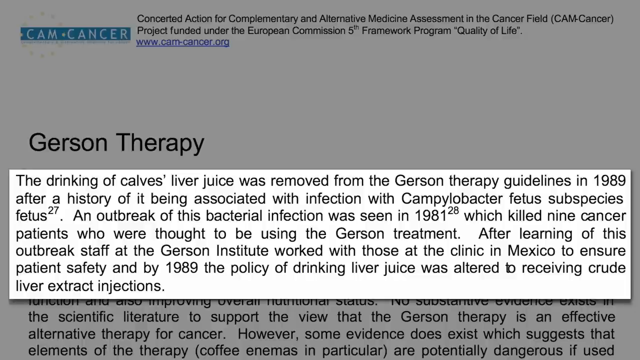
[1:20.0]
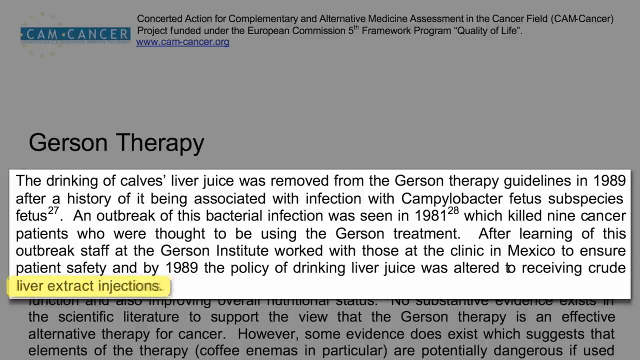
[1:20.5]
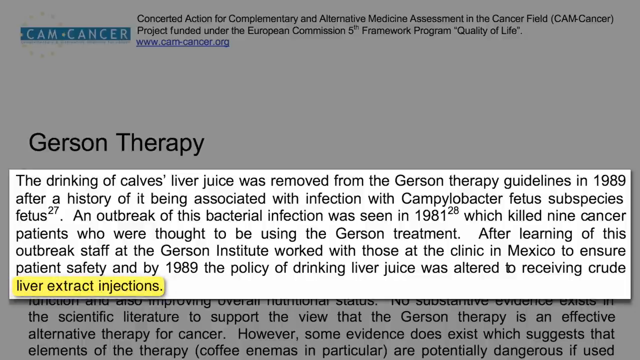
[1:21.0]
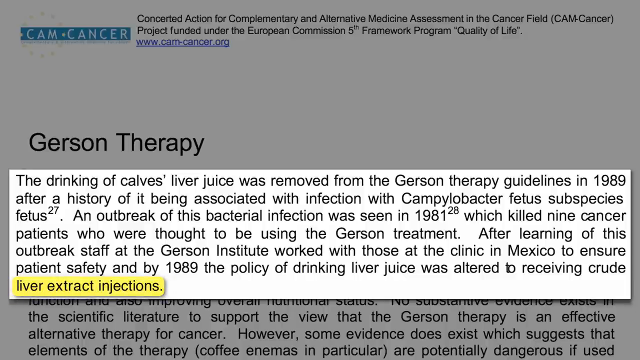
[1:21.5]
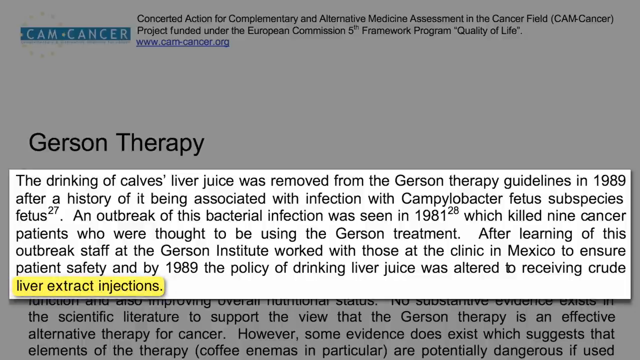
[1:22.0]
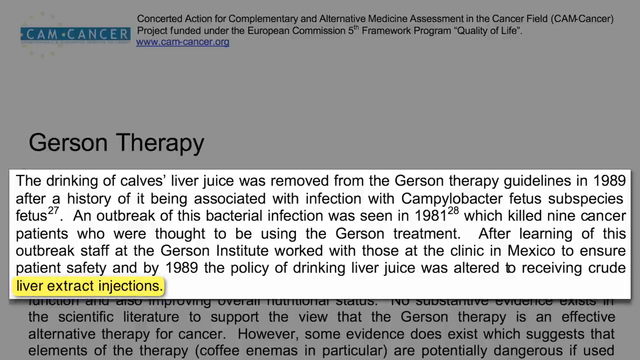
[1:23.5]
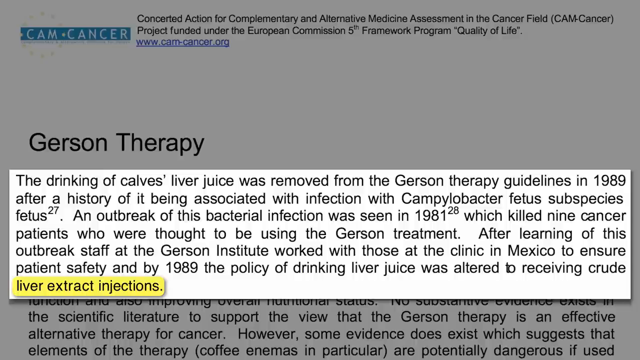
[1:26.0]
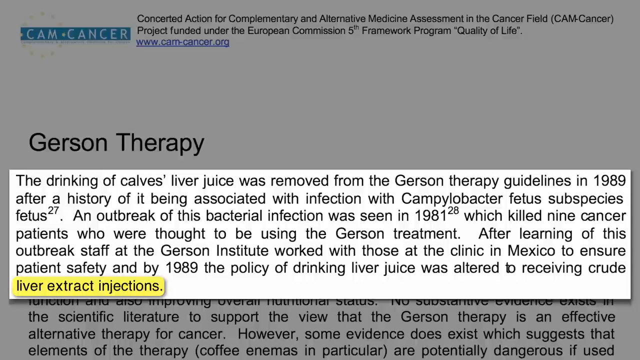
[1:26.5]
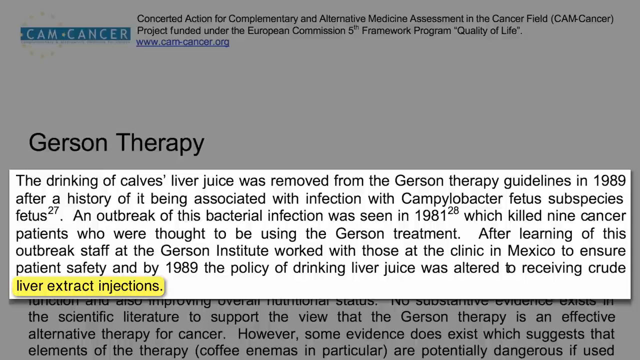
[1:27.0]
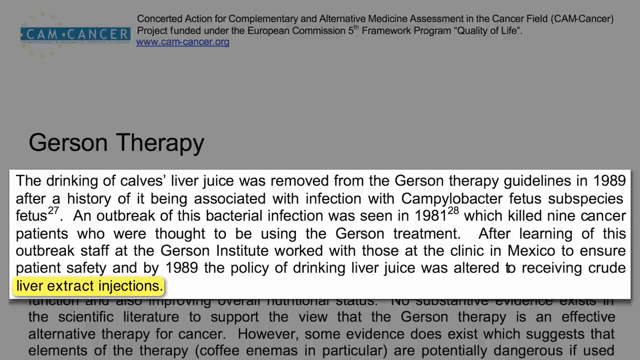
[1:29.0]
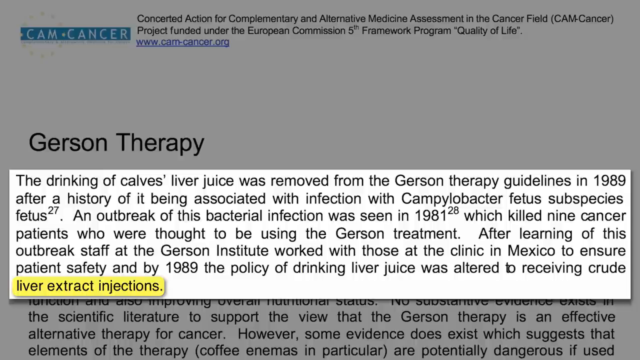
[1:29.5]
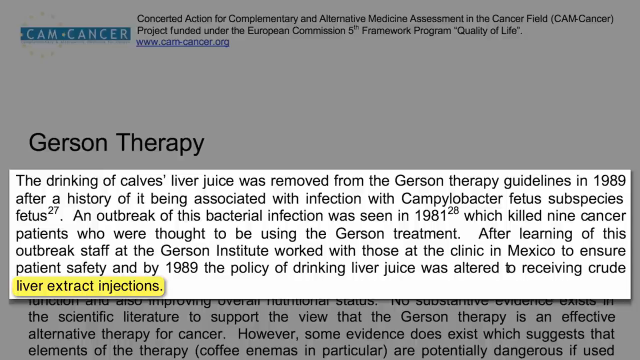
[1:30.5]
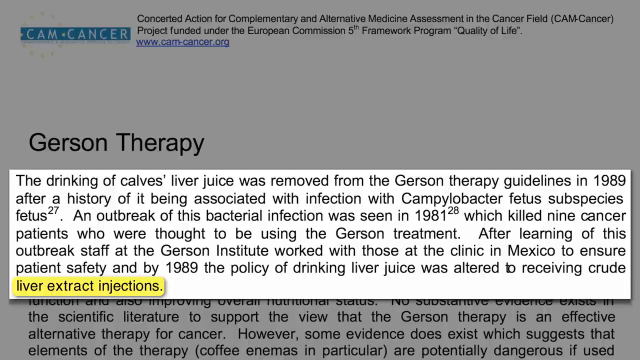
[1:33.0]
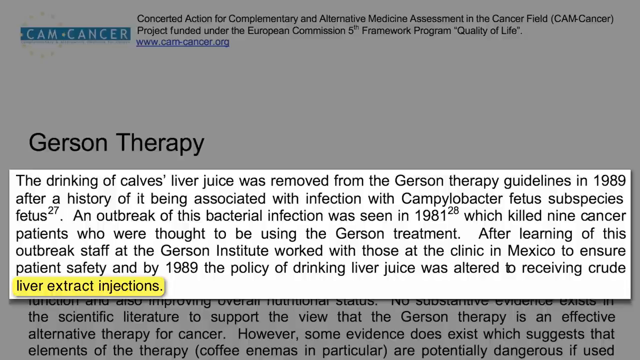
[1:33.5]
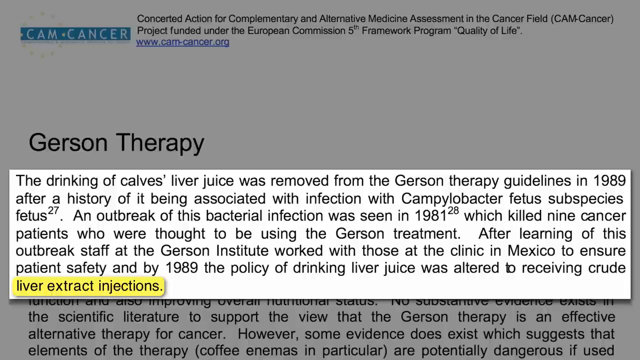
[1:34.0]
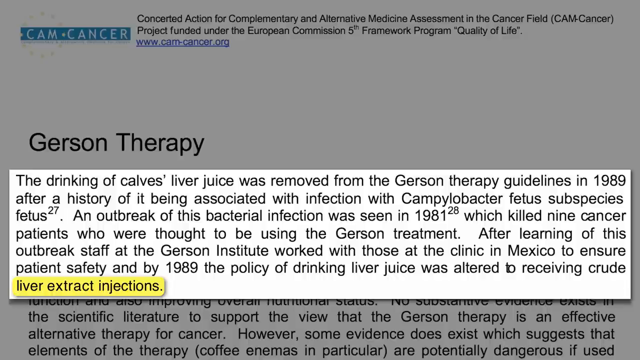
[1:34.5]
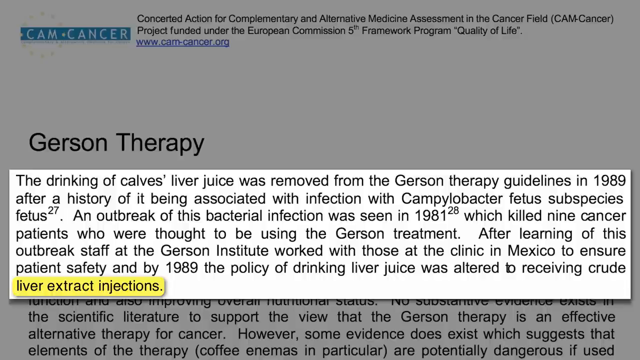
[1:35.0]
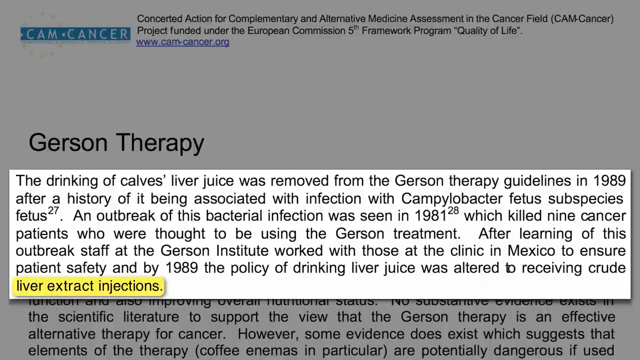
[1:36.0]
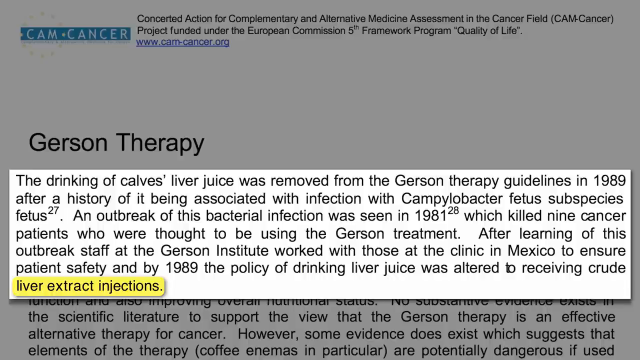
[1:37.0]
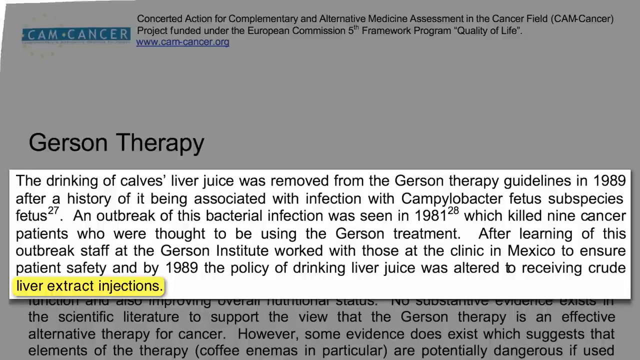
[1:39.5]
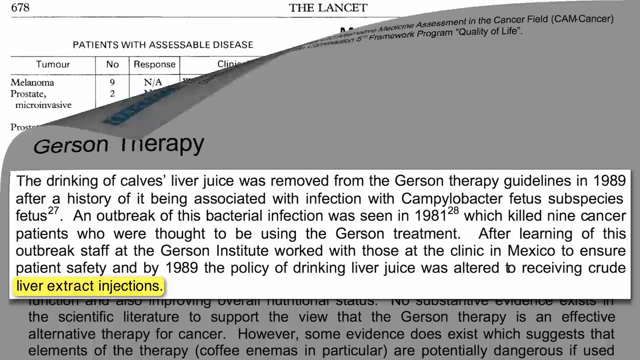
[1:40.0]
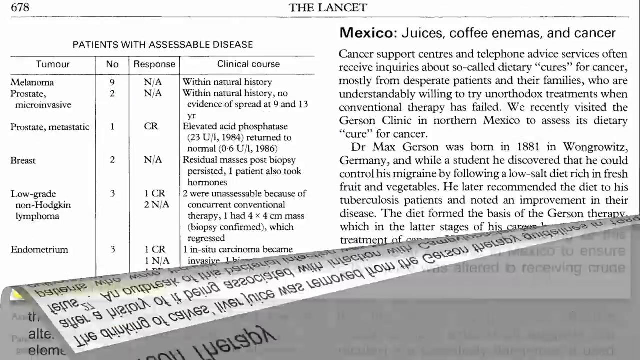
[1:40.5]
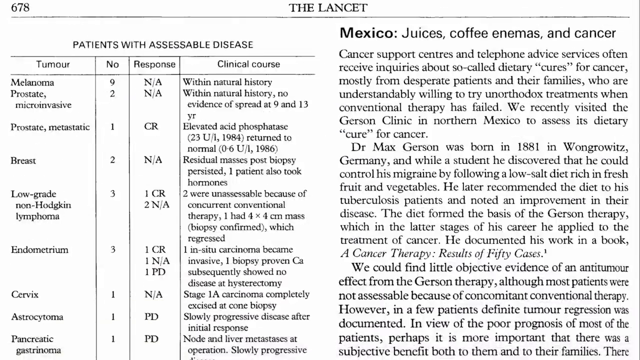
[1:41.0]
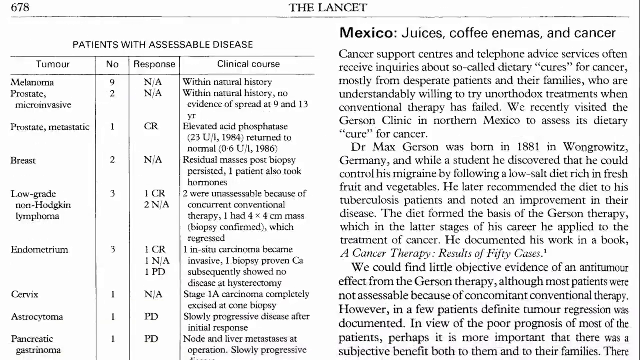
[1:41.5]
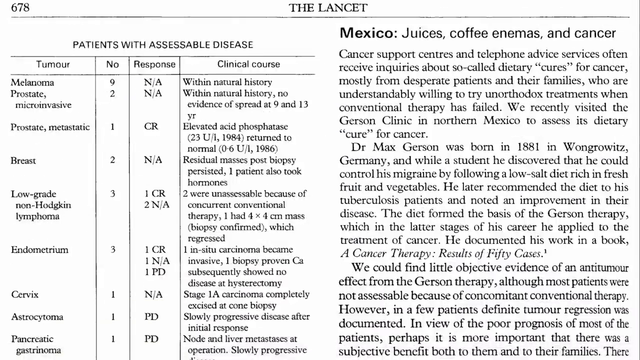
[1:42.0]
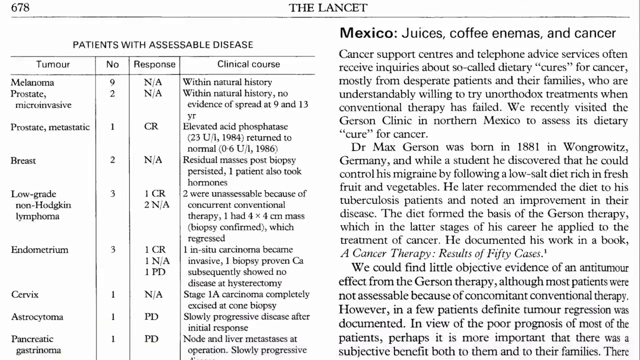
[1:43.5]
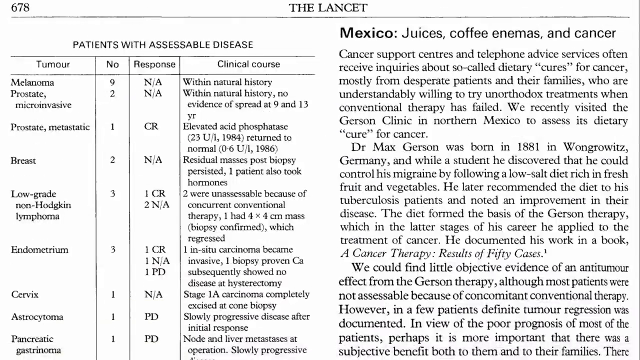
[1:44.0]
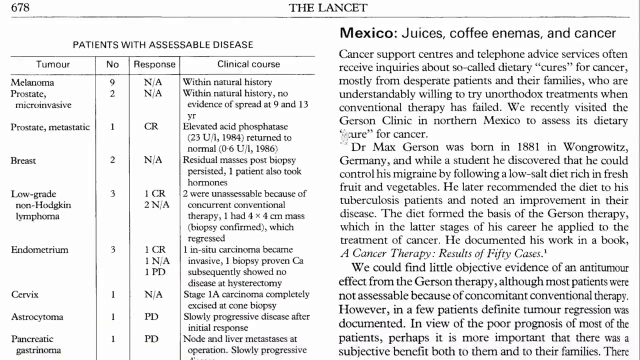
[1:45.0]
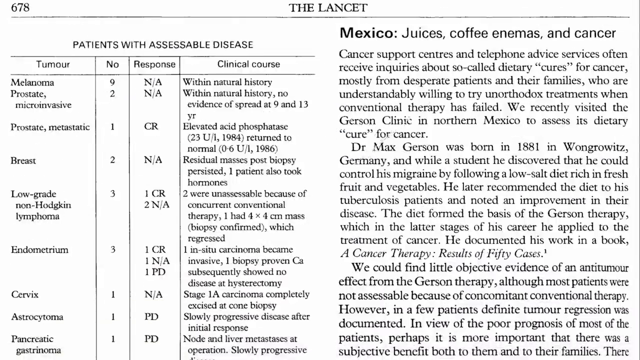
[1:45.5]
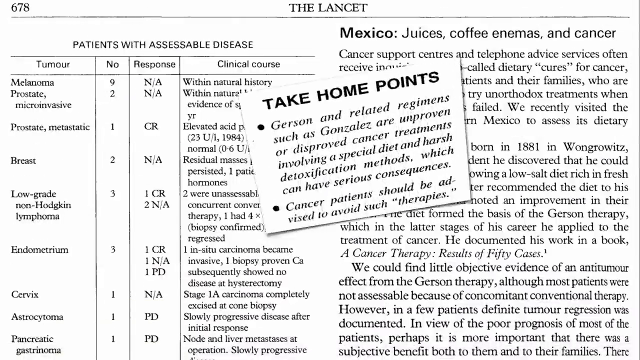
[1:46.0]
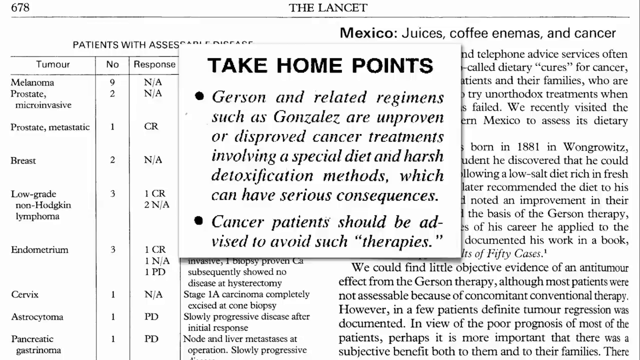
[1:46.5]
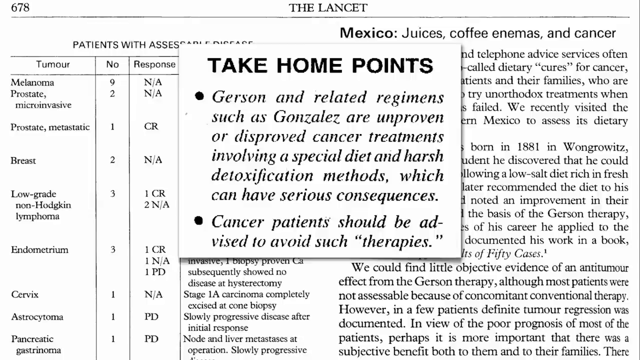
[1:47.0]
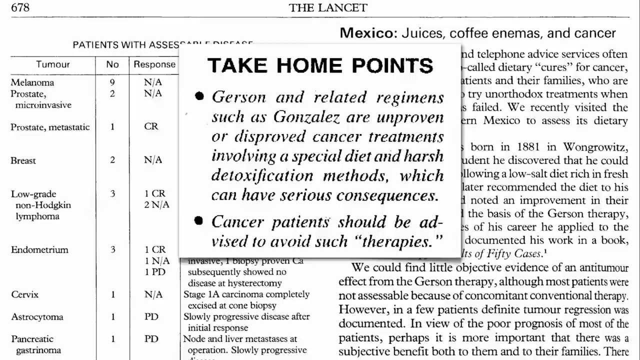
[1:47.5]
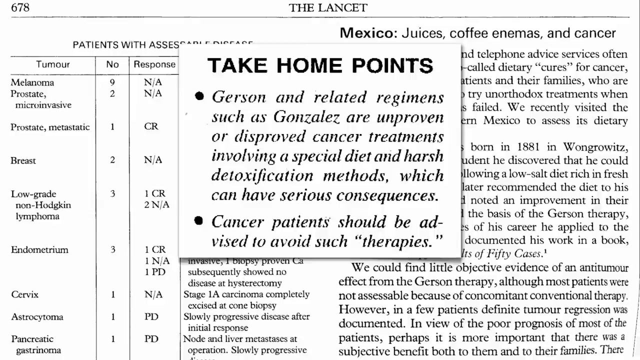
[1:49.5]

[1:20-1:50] A newspaper is in the background, and a piece of the article is enlarged to cover the center of the screen. It reads "the drinking of calves liver juice was removed from the garrison therapy guidelines in 1999 after a history of it being associated with infection with Campylobacter fetus subspecies fetus. An outbreak of this bacterial infection was seen in 1981, which killed nine cancer patients who were thought to be using the garrison treatment. After learning of this outbreak, staff at the Garrison Institute worked with those at the clinic in Mexico to ensure patient safety, and by 1989, the policy of drinking liver juice was altered to receiving crude liver extract injections." The words "liver extract injections" are highlighted in yellow. Another news article is then shown, and a piece of it is enlarged, reading "take-home points, garrison and related regiments such as Gonzales are unapproved or disapproved cancer treatments involving a special diet and harsh detoxification methods which have serious consequences. Cancer patients should be advised to avoid such therapies." The word 'therapies' is in quotation marks.